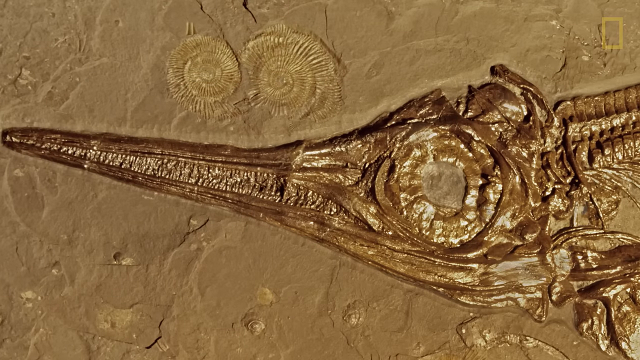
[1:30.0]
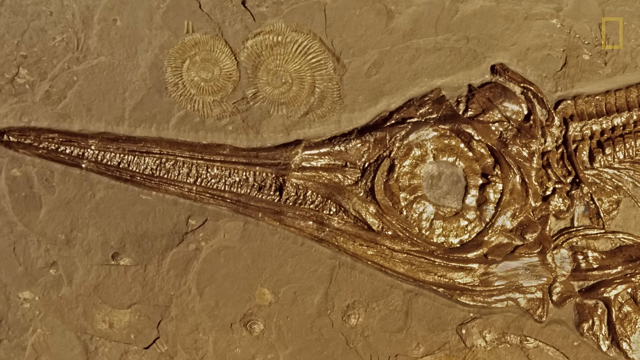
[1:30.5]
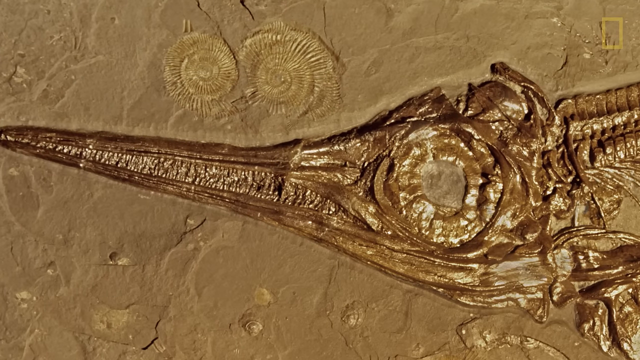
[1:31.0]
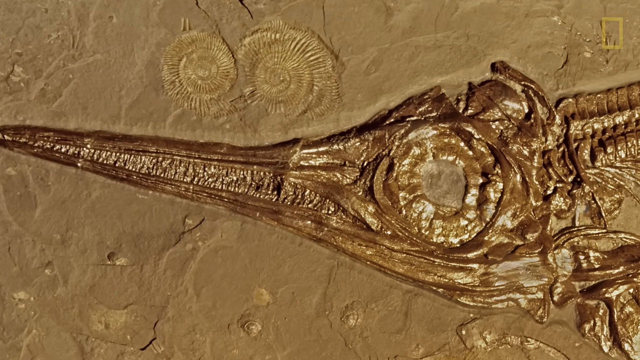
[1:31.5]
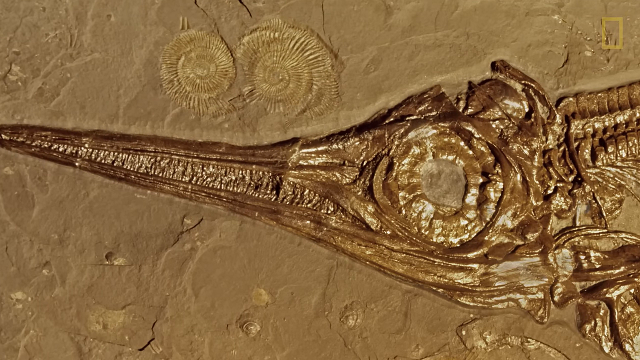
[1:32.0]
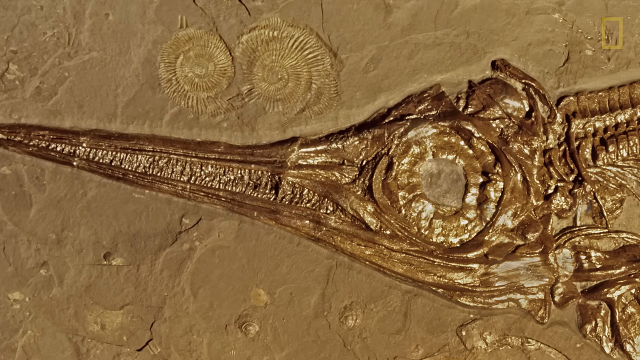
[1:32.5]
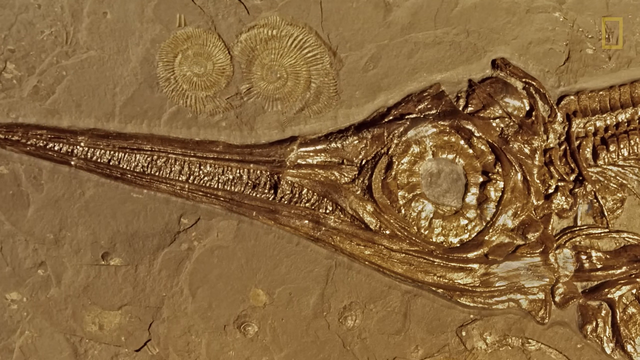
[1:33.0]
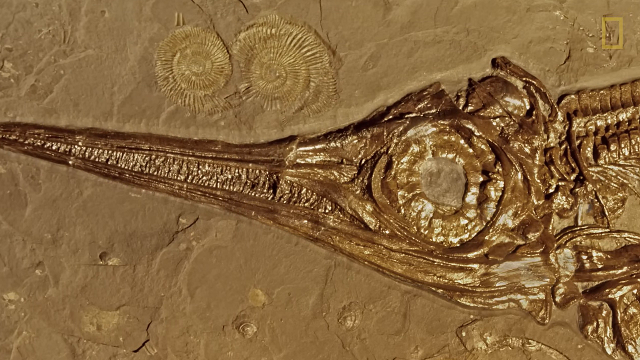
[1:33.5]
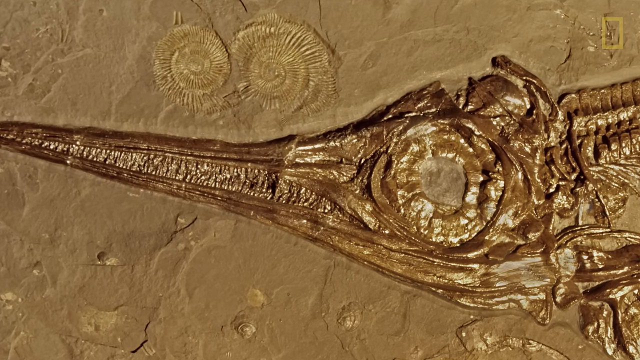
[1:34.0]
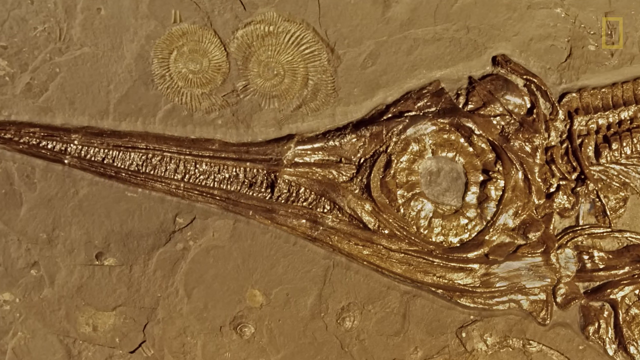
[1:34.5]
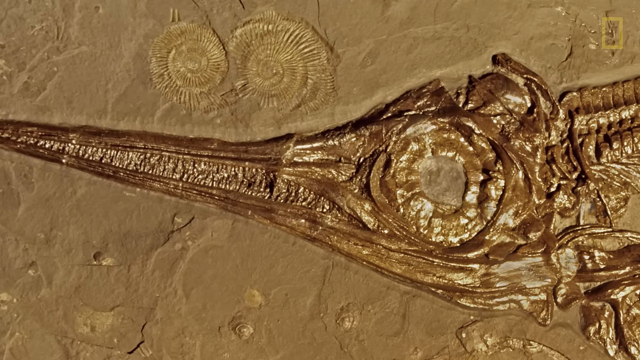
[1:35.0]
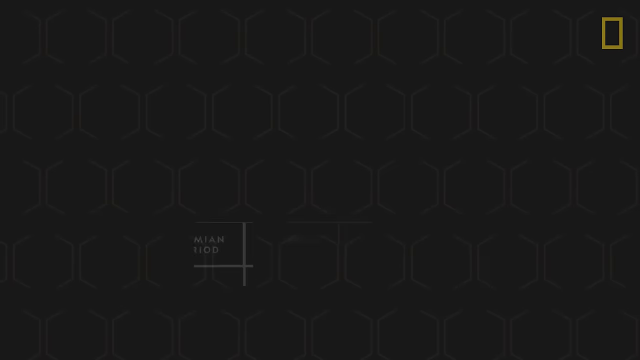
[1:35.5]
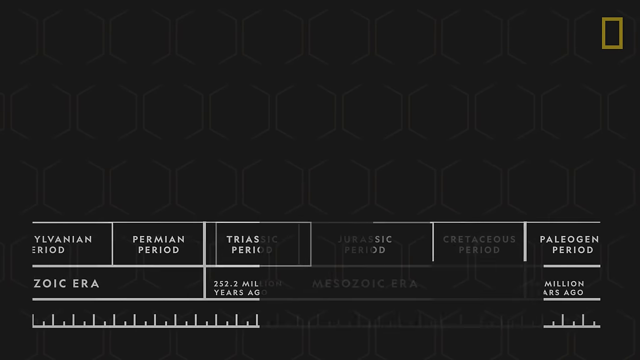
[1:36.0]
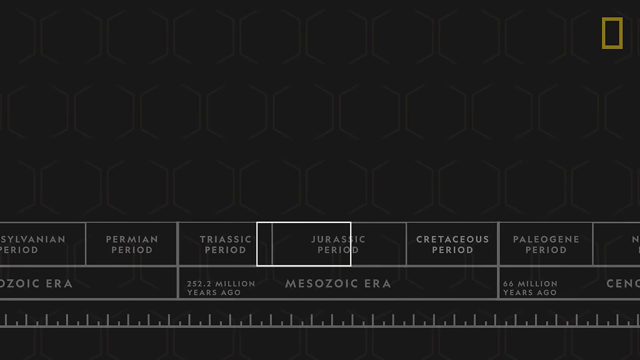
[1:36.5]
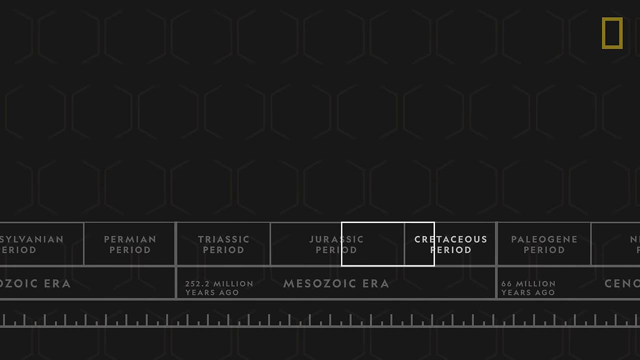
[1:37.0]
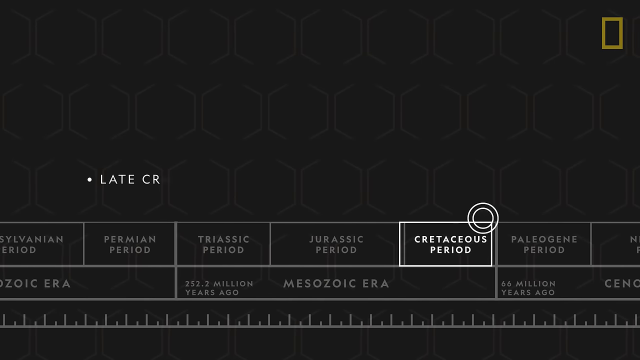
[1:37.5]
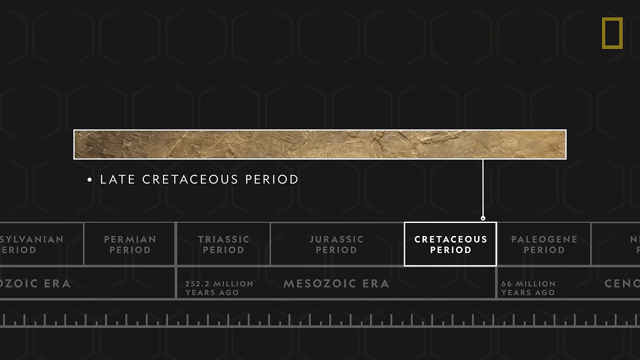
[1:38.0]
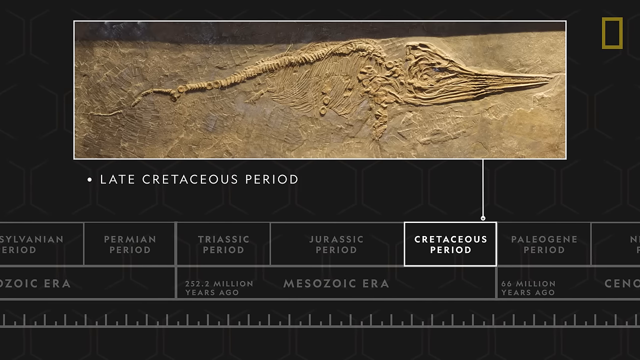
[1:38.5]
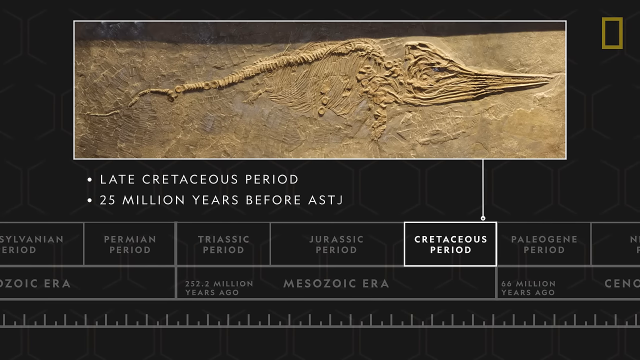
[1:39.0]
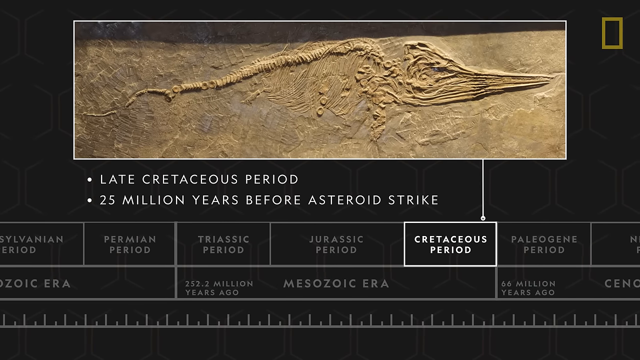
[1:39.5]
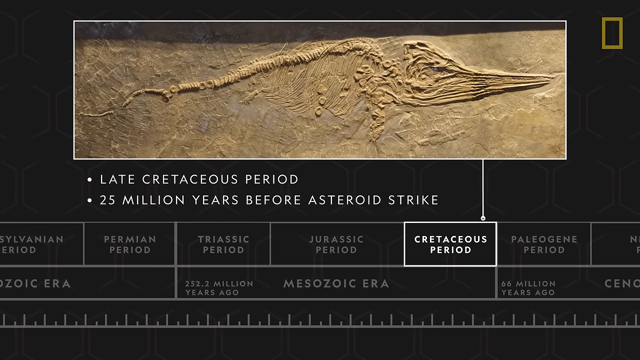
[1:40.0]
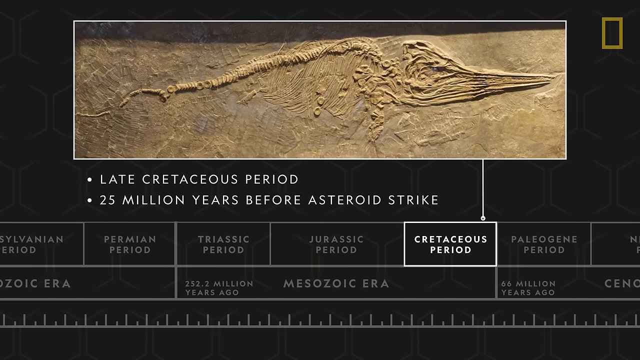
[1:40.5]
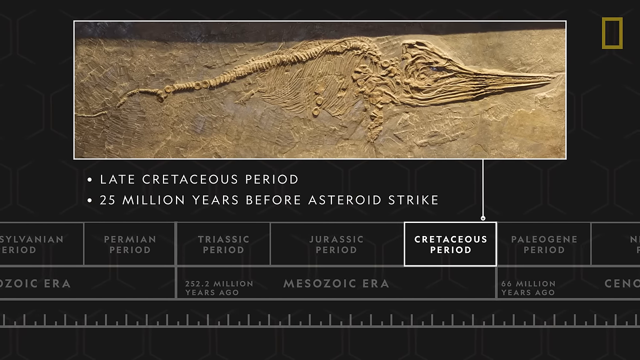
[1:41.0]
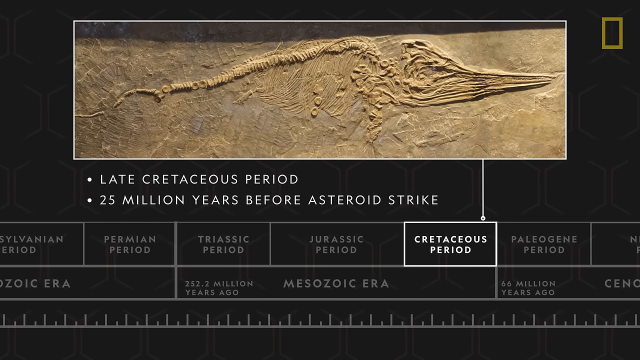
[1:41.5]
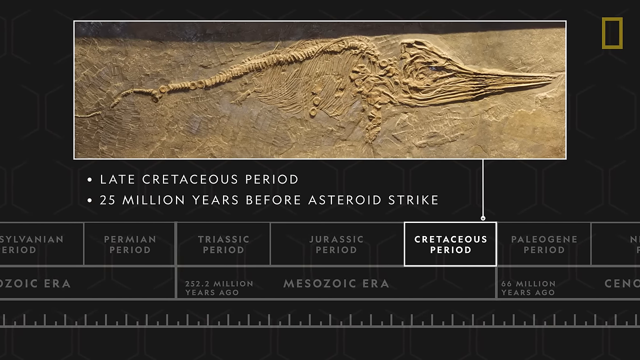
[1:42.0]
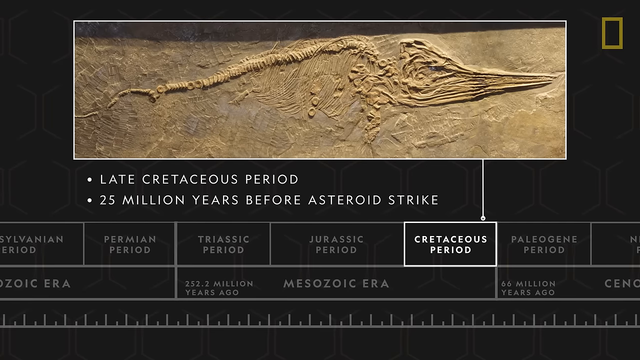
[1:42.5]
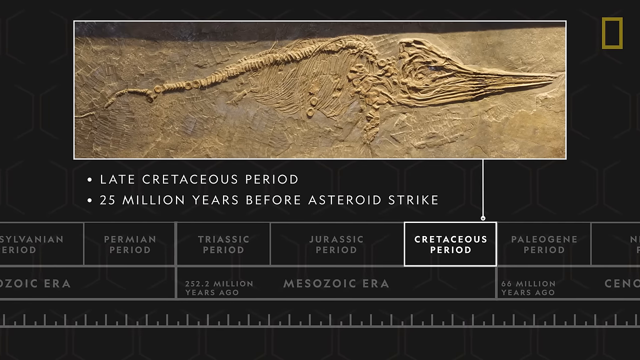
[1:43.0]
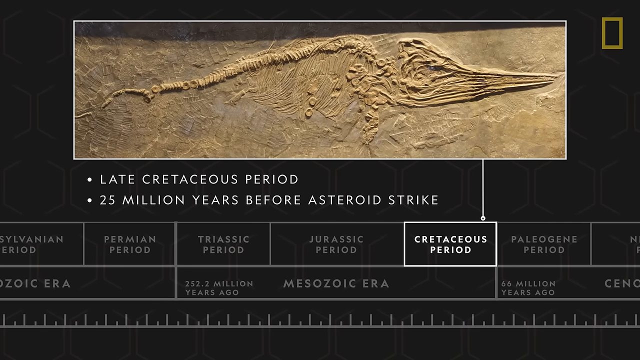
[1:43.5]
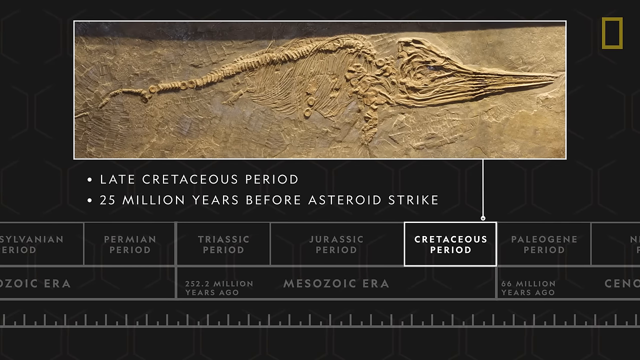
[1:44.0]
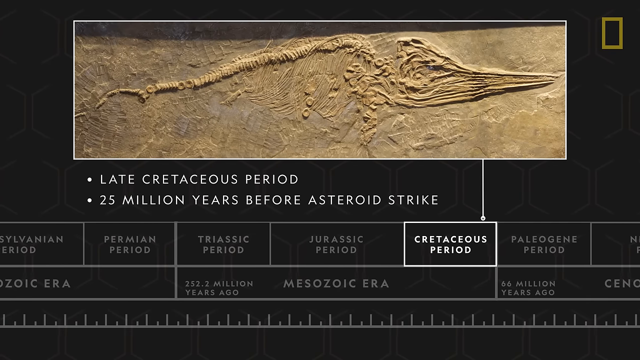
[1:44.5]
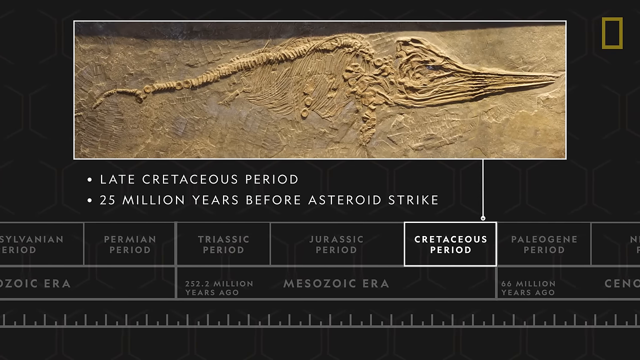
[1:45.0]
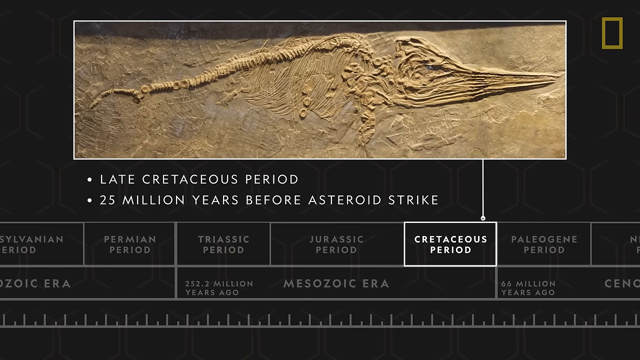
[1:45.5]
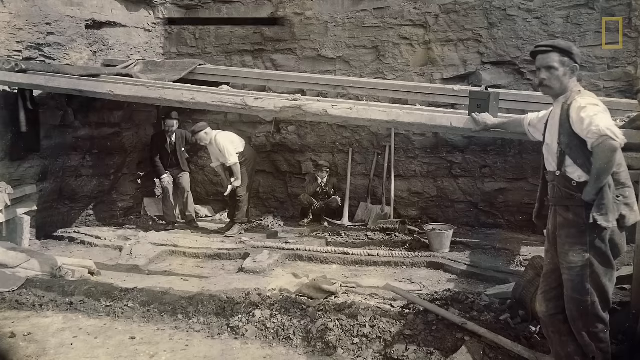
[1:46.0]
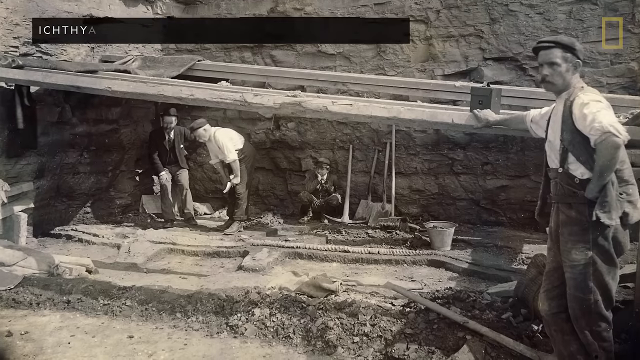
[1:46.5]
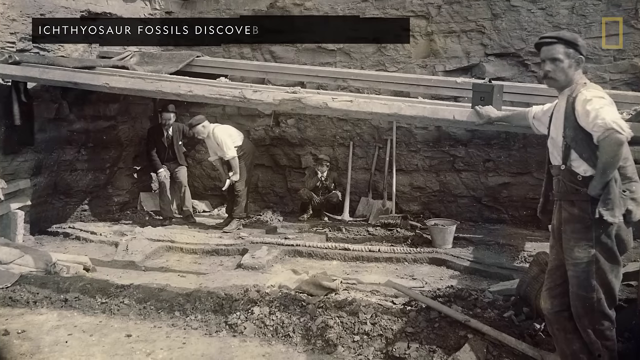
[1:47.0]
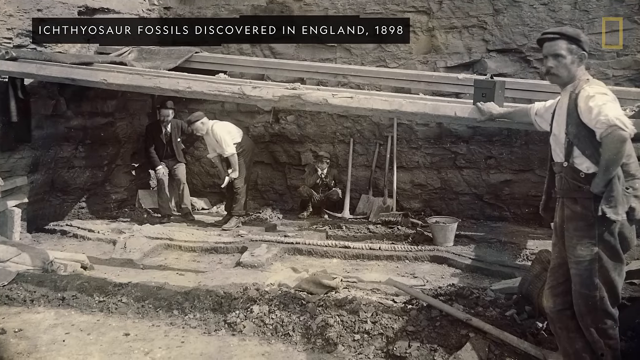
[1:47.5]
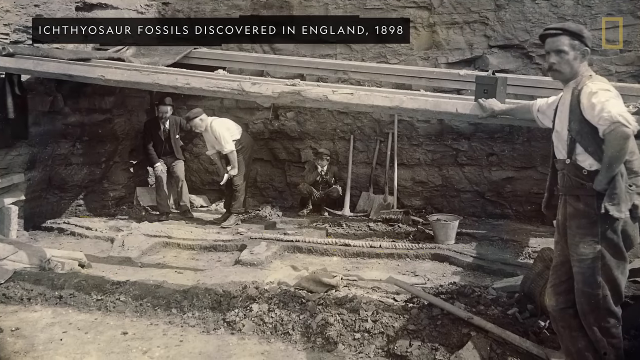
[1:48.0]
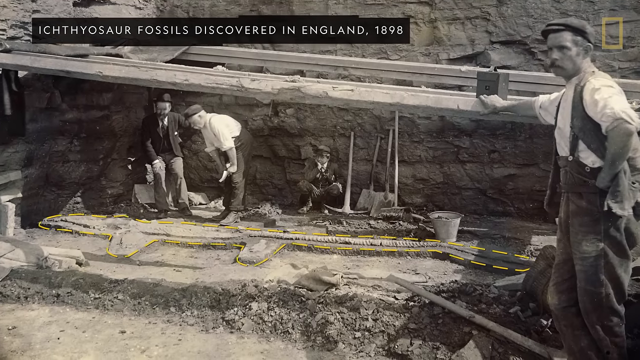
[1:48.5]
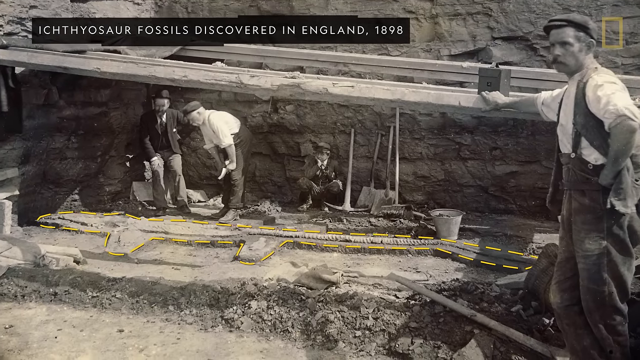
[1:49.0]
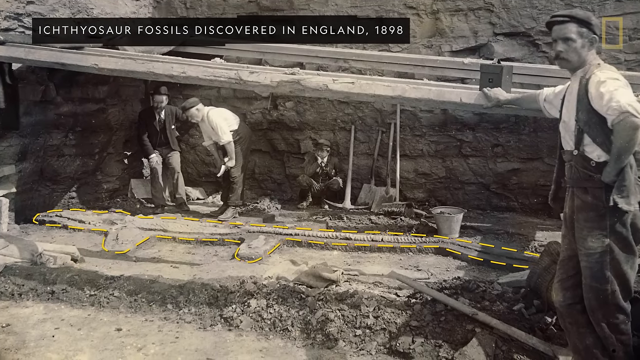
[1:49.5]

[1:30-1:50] A fossilized fish head set into gray stone appears, and the view slowly pans forward towards its large eye. A calendar appears along the bottom, with a white box moving slightly from left to right to highlight the Cretaceous period. A photograph of the fossil appears, this time with the fish facing right instead of left, labeled "late Cretaceous period", "25 million years before asteroid strike". The fossil is slowly zoomed in on. The video then changes to a black-and-white photograph of multiple men who seem to be excavating a large fossil, labeled "Ichthyosaur fossils discovered in England, 1898". In the photo, two men look down at a mostly excavated fossil of the creature, and a man leans back against a wall next to it with his knees bent. In the foreground on the right, a man leans on a frame built over the pit they dug to excavate the fossil.